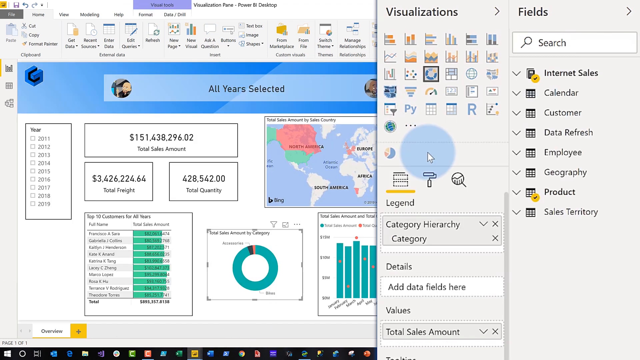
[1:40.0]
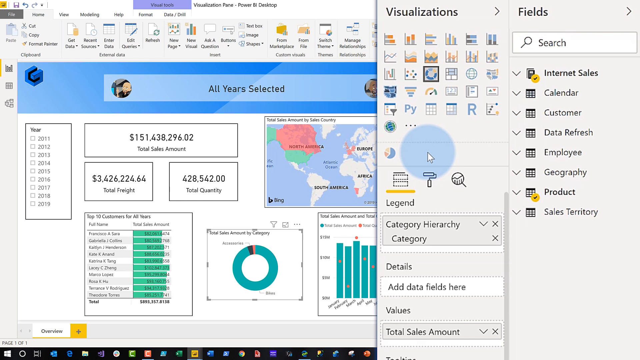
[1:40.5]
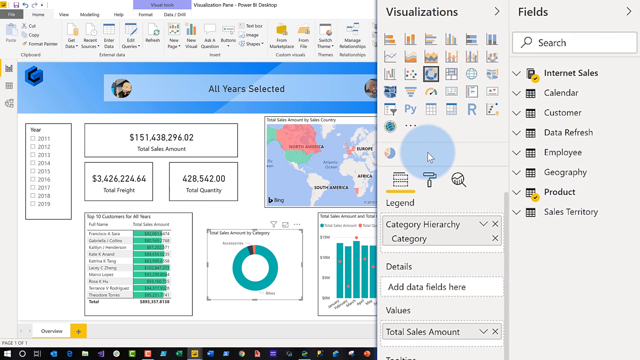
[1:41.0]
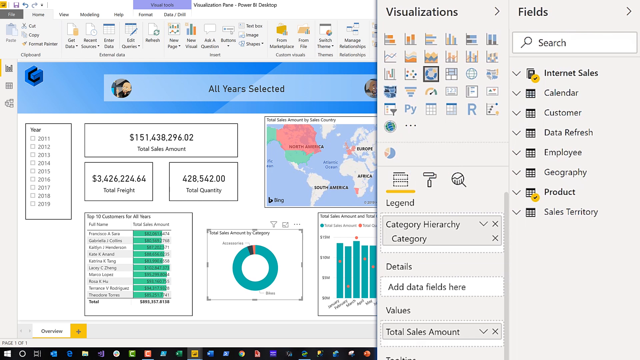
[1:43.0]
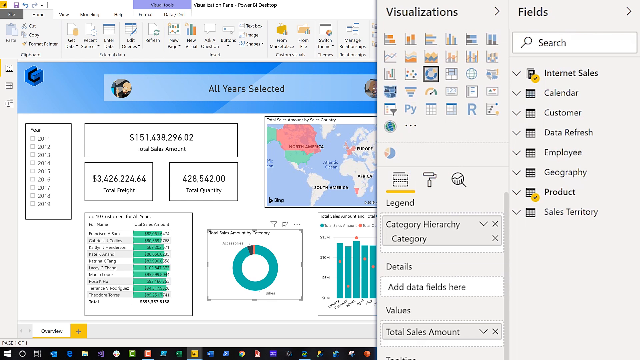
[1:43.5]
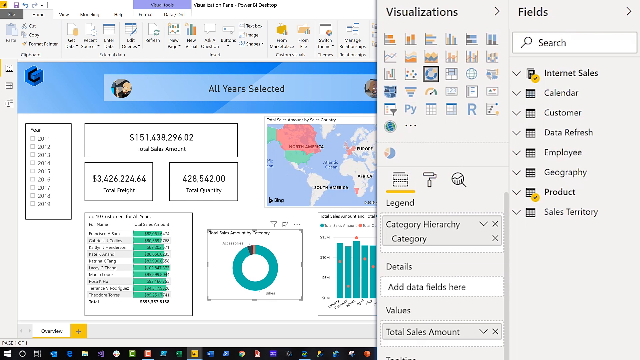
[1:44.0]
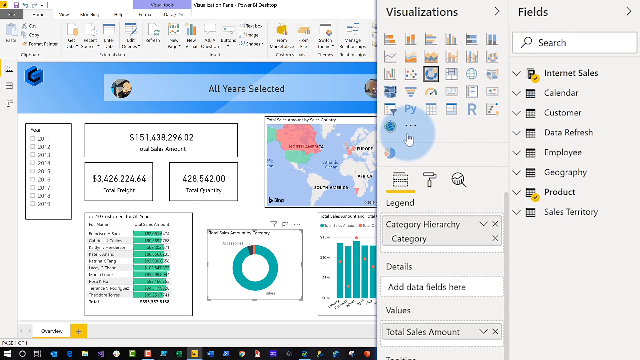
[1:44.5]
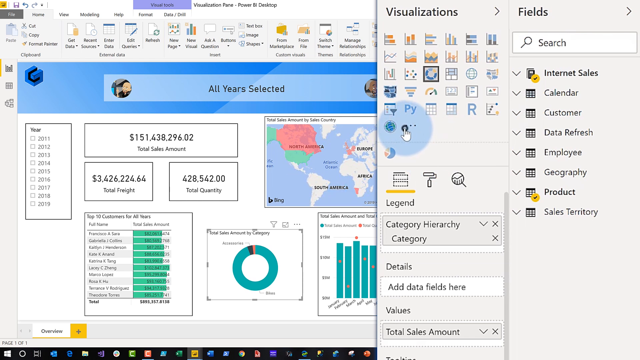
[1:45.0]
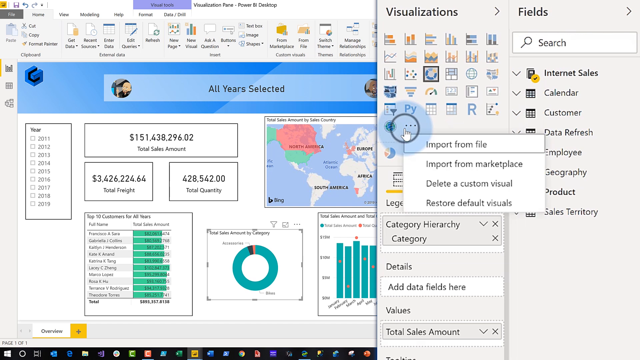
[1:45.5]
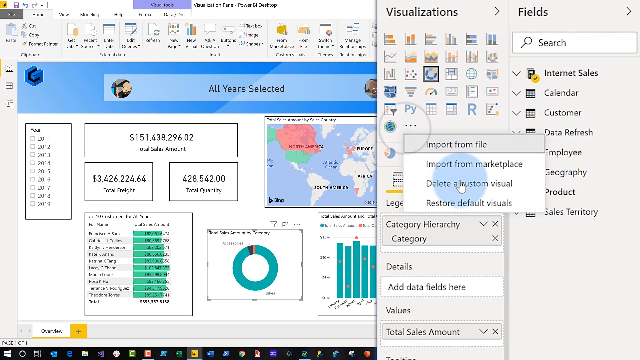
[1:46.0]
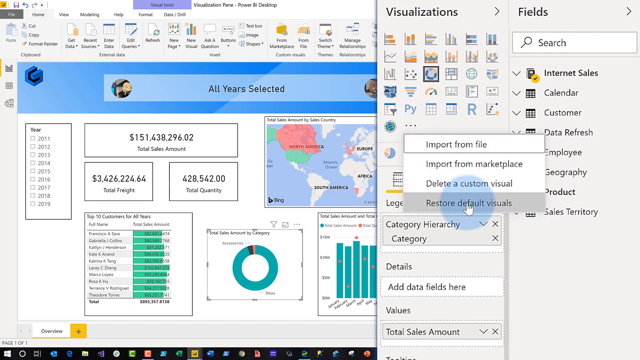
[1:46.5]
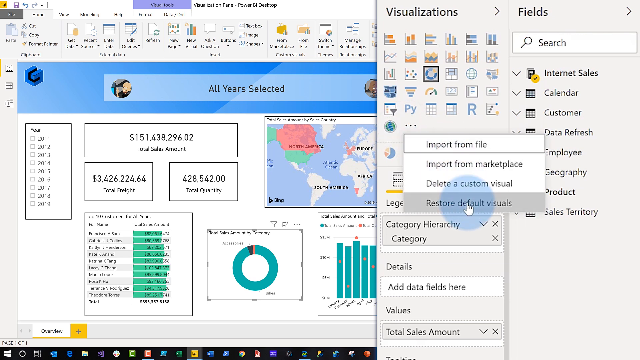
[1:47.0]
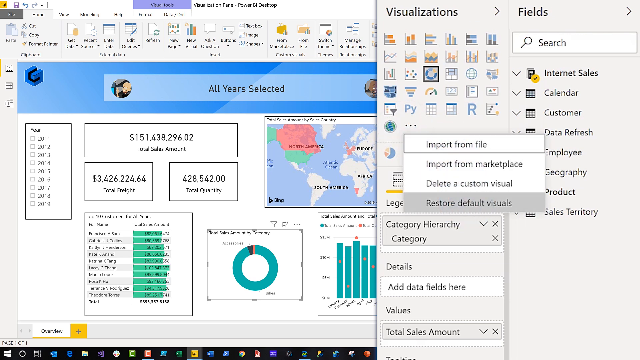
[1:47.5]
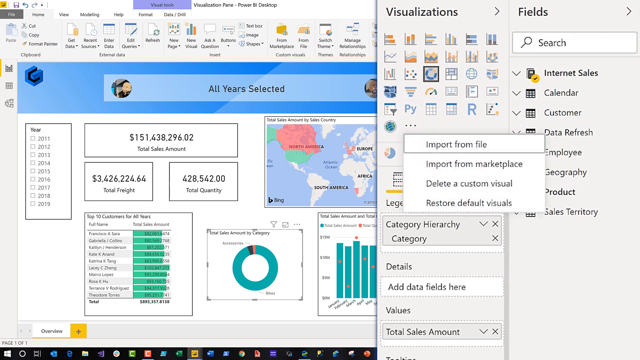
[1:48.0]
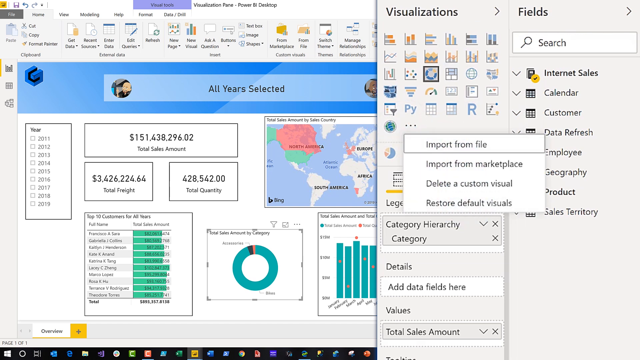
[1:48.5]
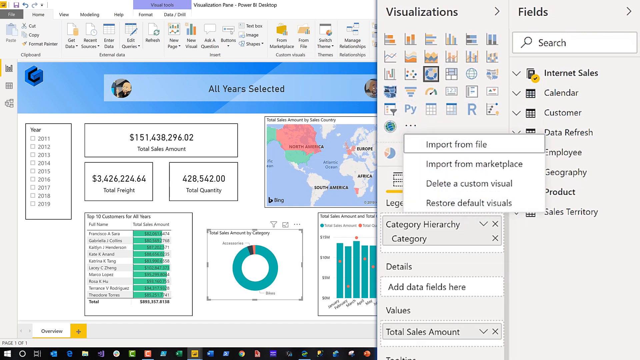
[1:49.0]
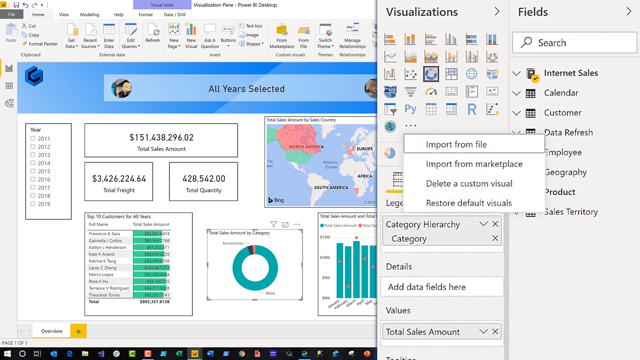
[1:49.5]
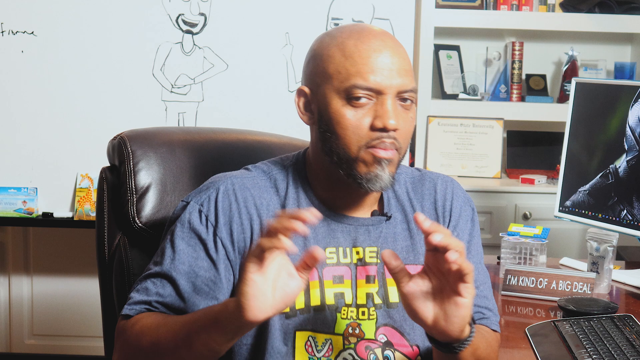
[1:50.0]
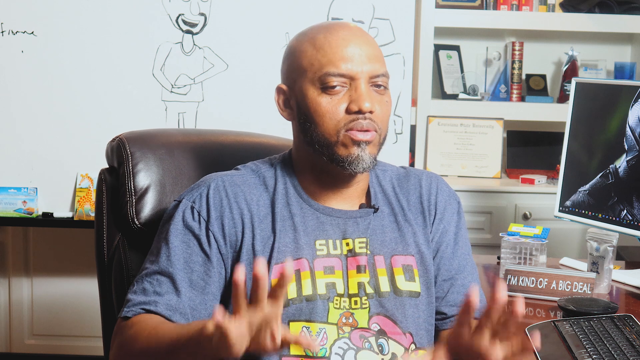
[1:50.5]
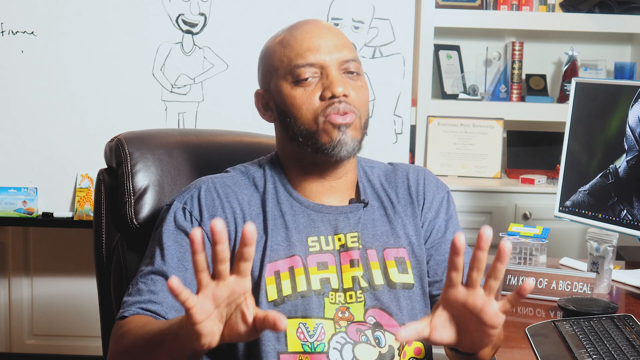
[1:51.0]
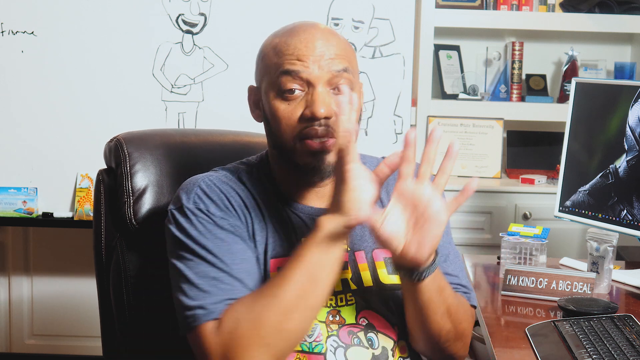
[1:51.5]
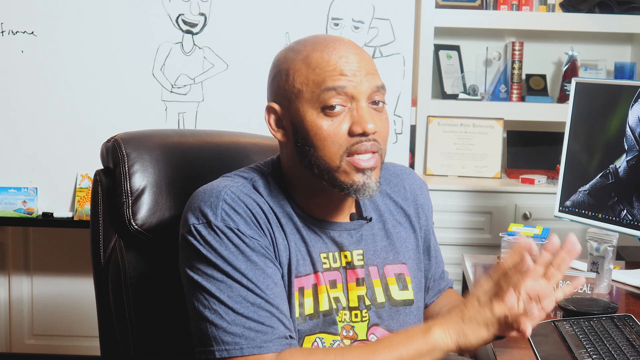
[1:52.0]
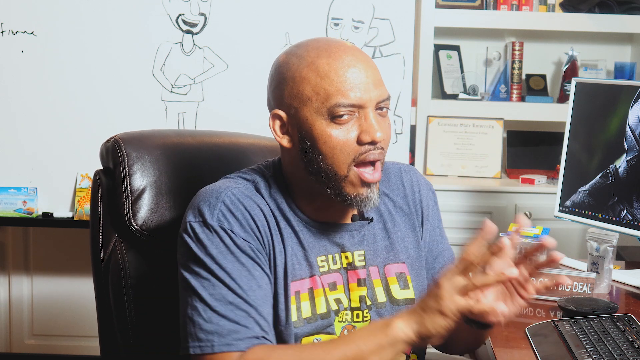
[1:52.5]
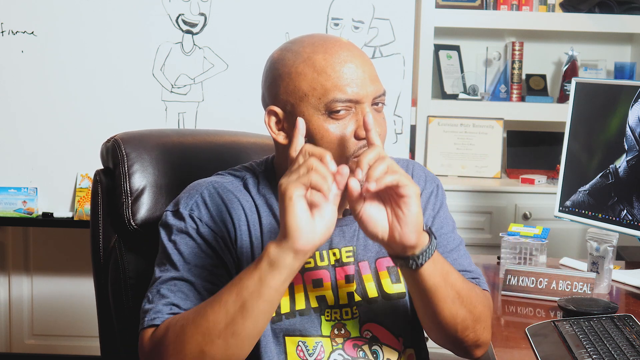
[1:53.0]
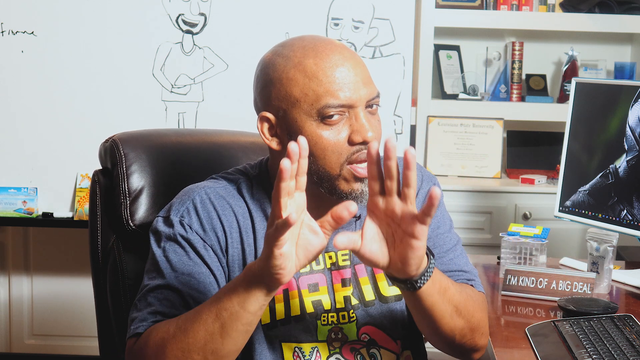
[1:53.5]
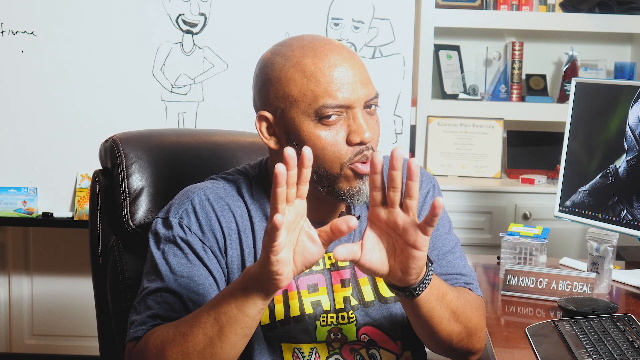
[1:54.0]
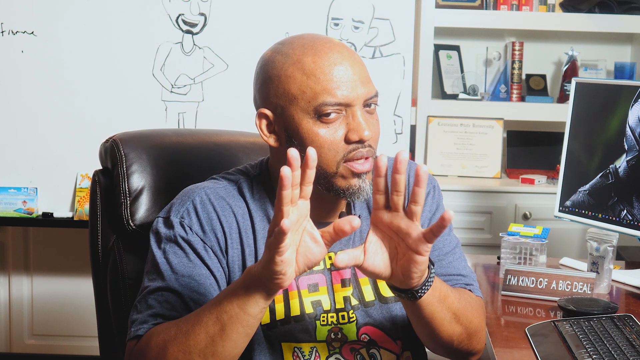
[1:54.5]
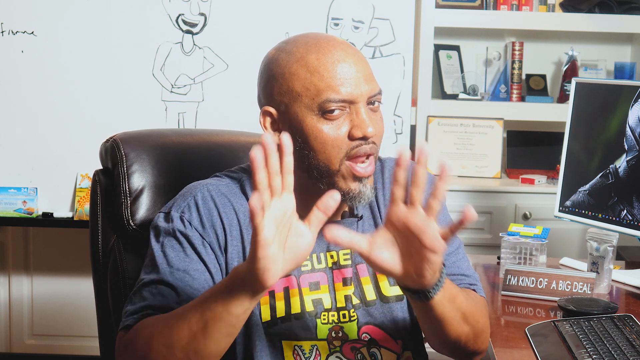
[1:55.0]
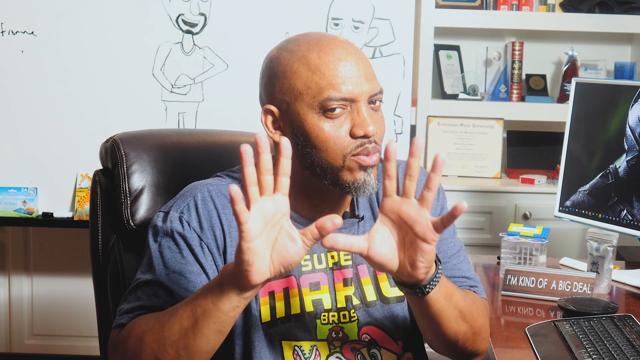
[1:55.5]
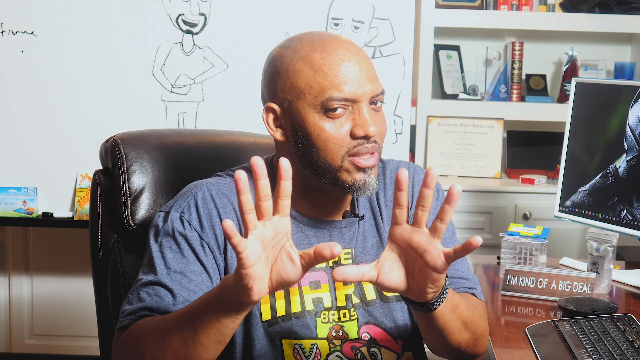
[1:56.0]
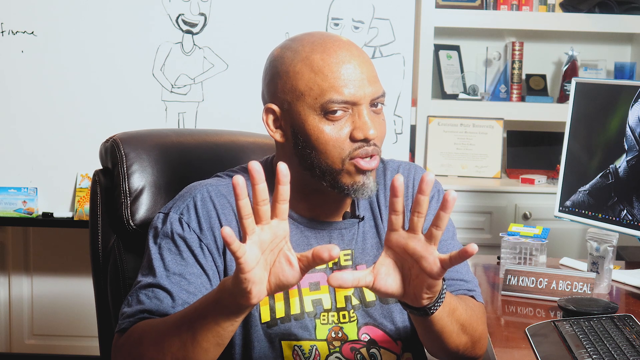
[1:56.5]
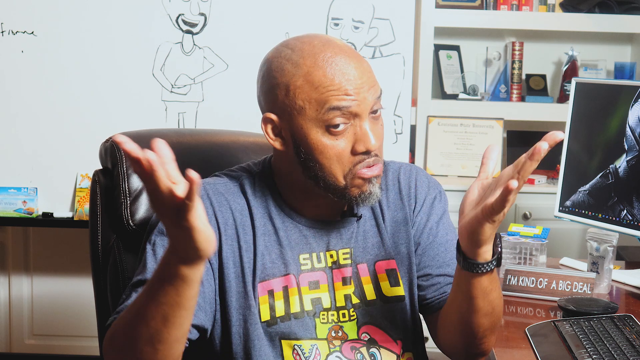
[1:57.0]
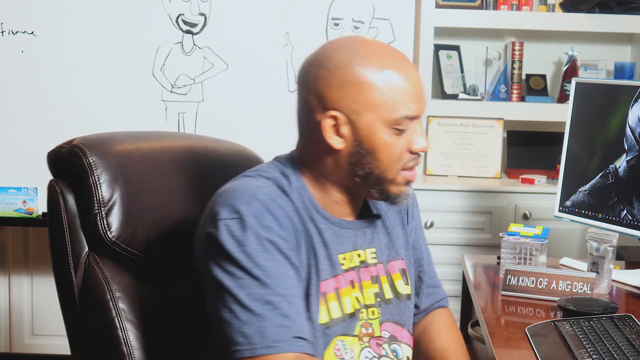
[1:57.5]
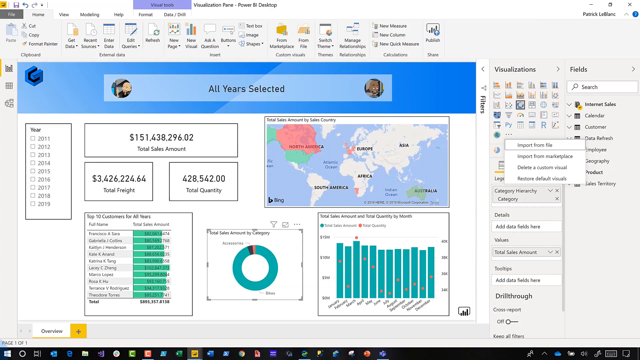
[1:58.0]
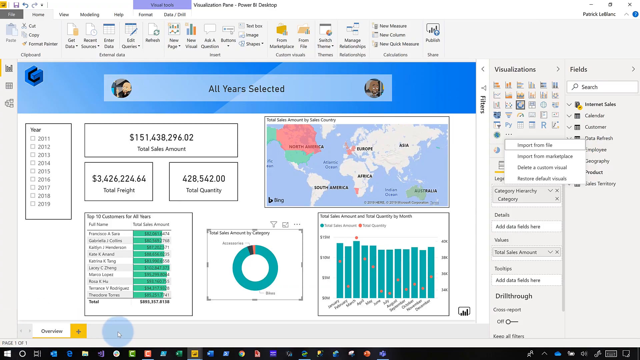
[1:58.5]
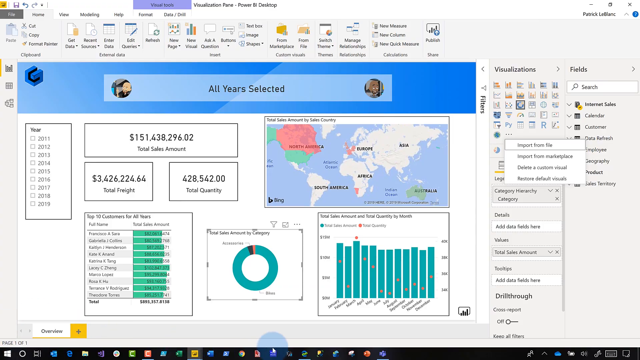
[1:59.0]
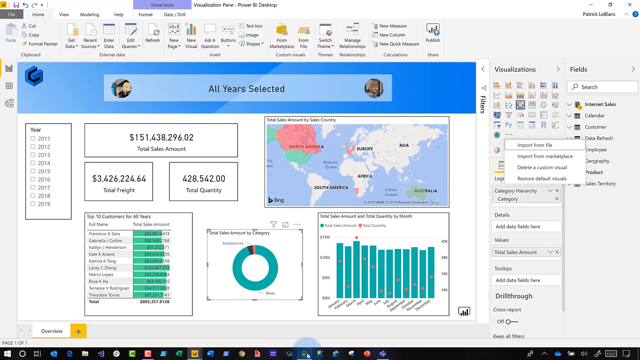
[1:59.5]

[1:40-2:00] The original screen from earlier is shown. The man clicks the three-dot icon at the bottom of the visualizations table, and four options appear, from top to bottom, starting with "import from file" and "import from marketplace" and ending with "restore default visuals." It looks as if he will click "restore," but he does not. The computer screen goes away and he is shown in the chair again, talking. He stretches both hands out in front of him toward the camera as if saying stop, moves both hands to the right side of the screen, then moves them back toward the camera, his mouth still moving. He puts his hands outward and turns back to his computer, and the same screen as before is shown briefly.